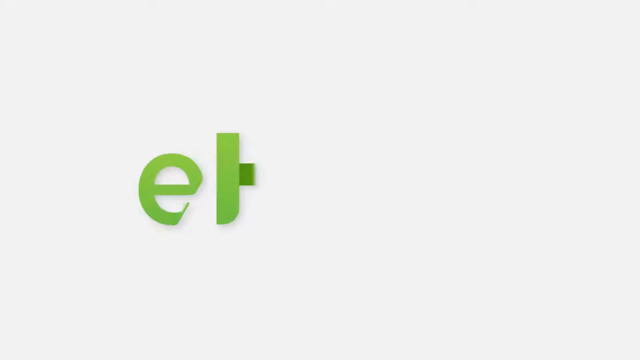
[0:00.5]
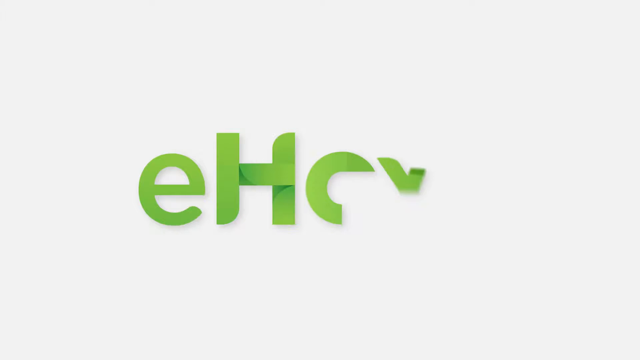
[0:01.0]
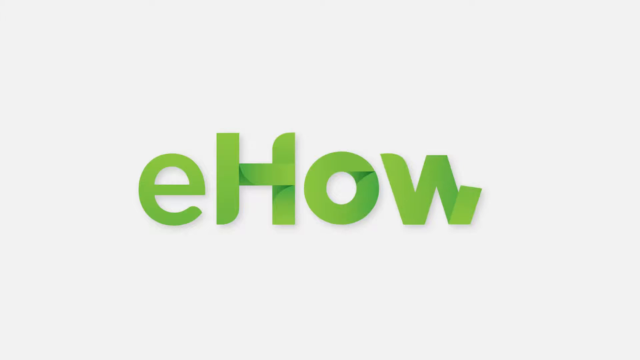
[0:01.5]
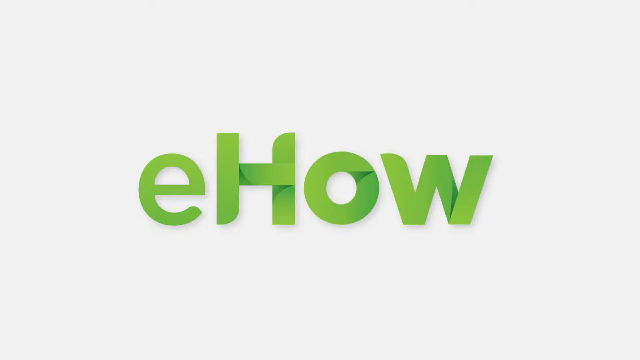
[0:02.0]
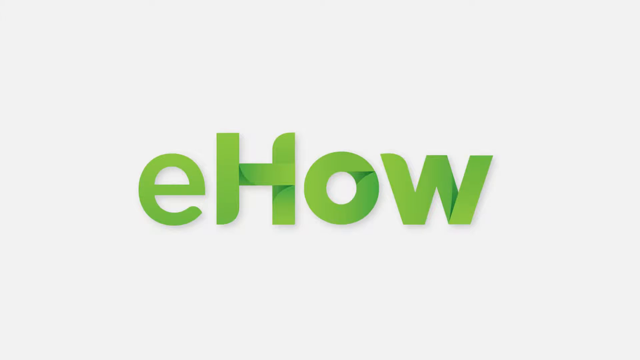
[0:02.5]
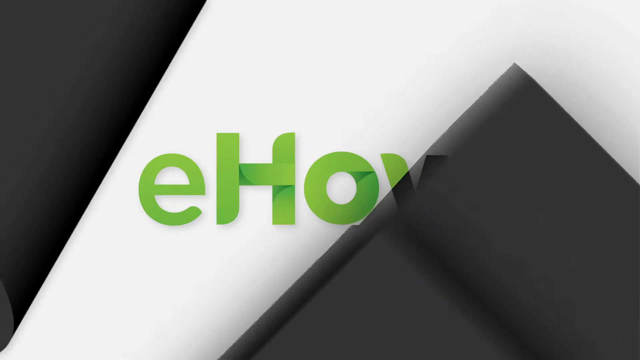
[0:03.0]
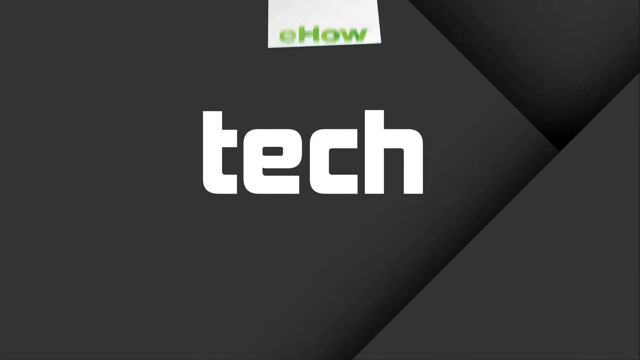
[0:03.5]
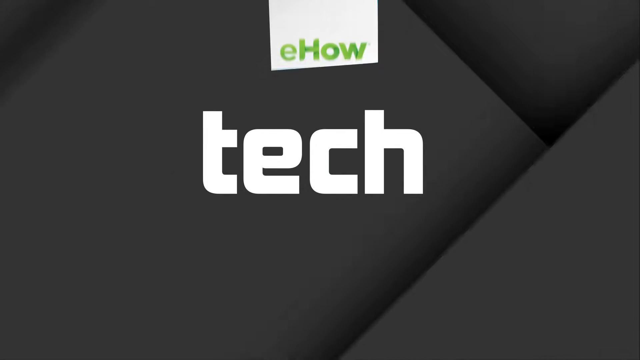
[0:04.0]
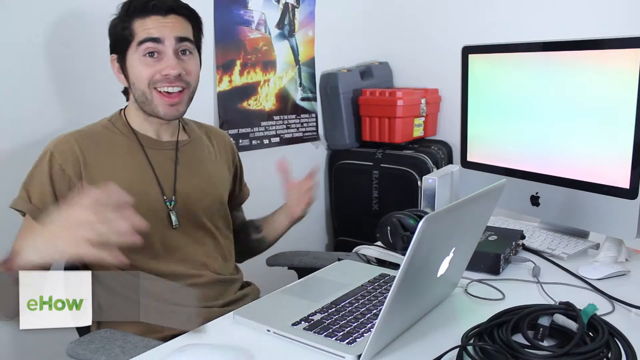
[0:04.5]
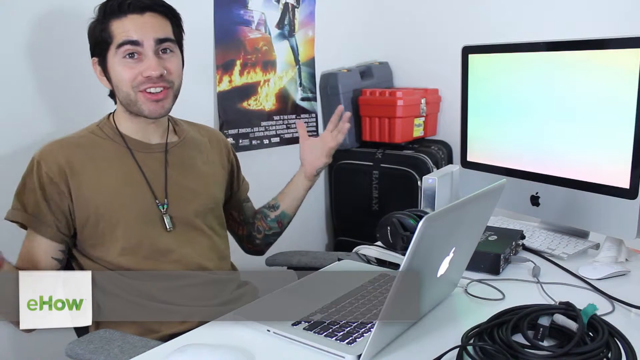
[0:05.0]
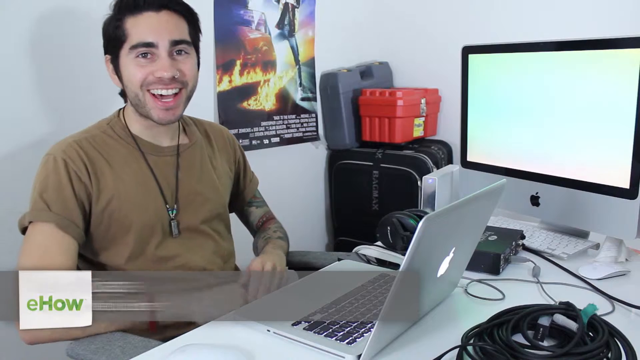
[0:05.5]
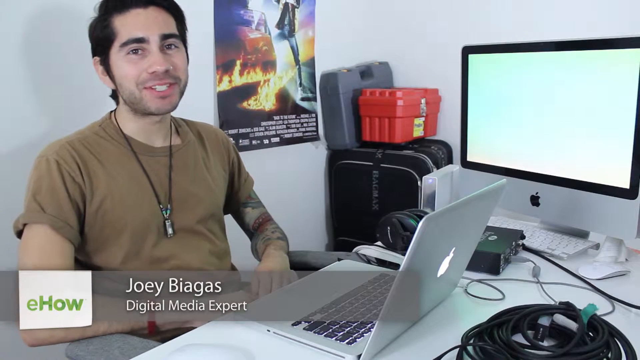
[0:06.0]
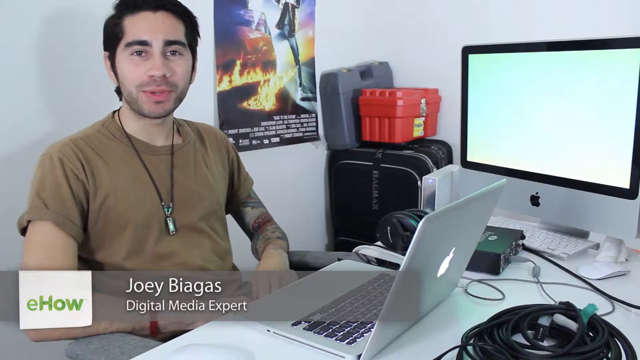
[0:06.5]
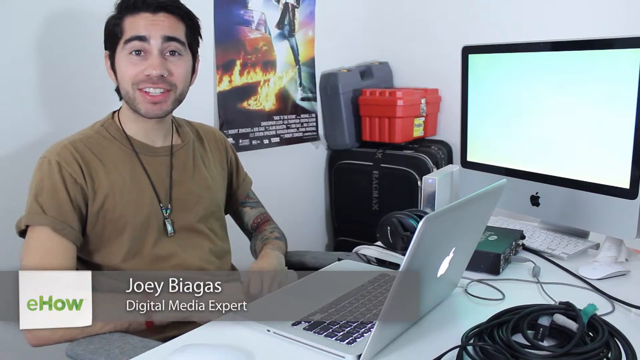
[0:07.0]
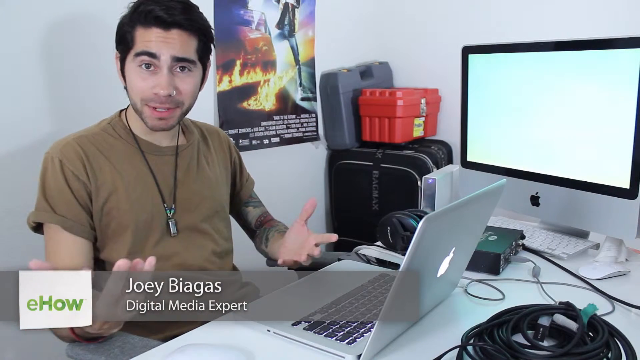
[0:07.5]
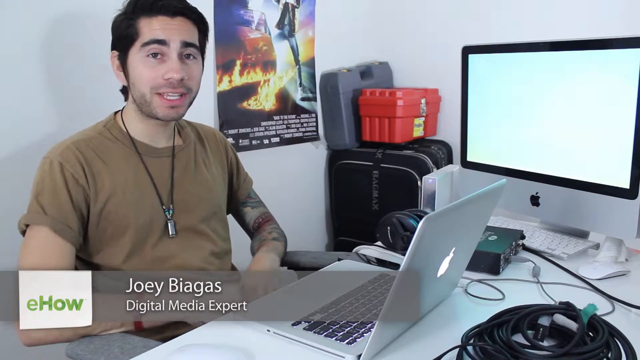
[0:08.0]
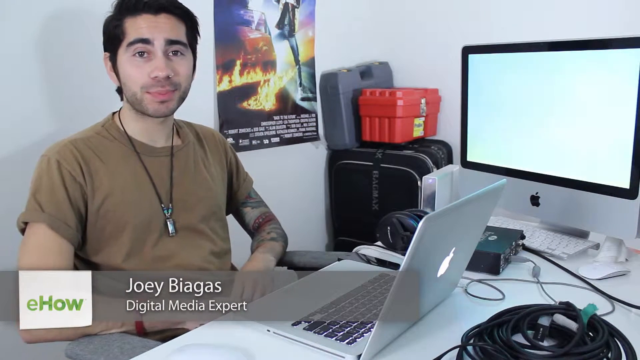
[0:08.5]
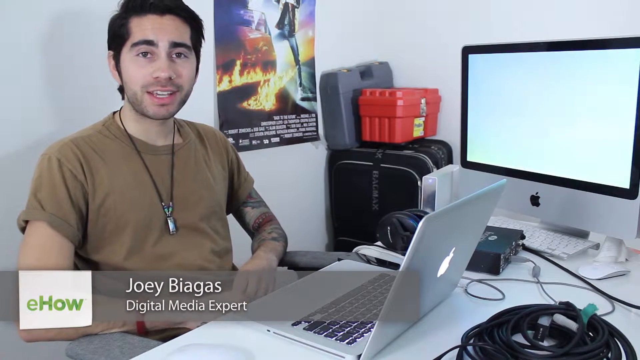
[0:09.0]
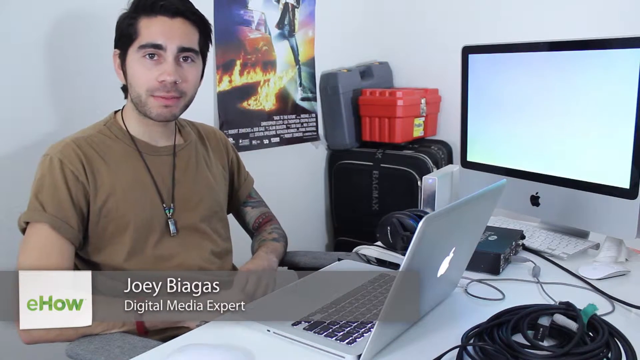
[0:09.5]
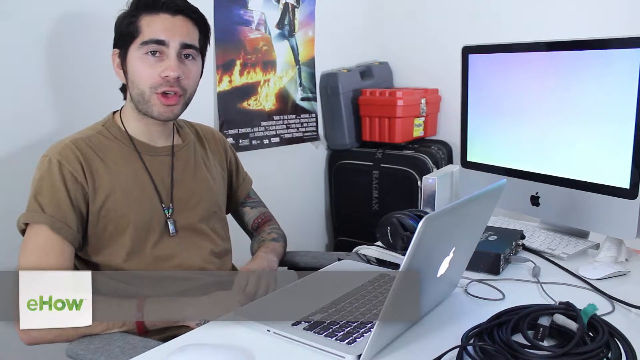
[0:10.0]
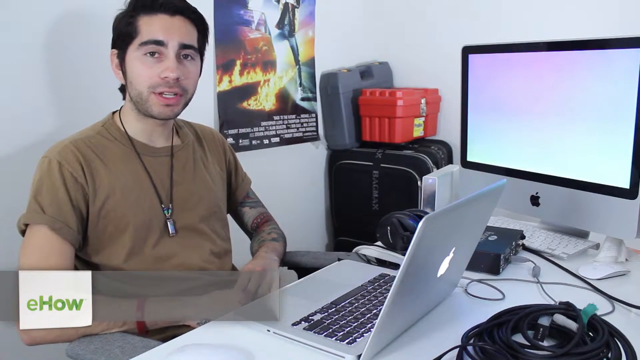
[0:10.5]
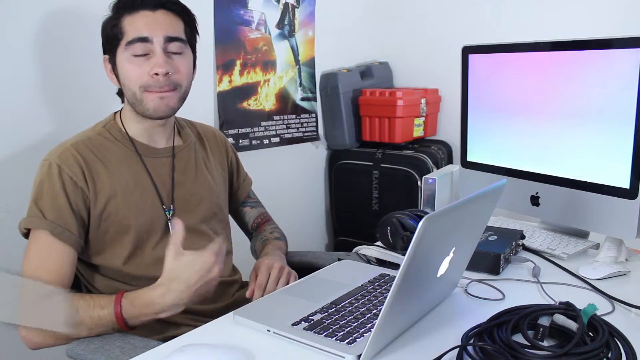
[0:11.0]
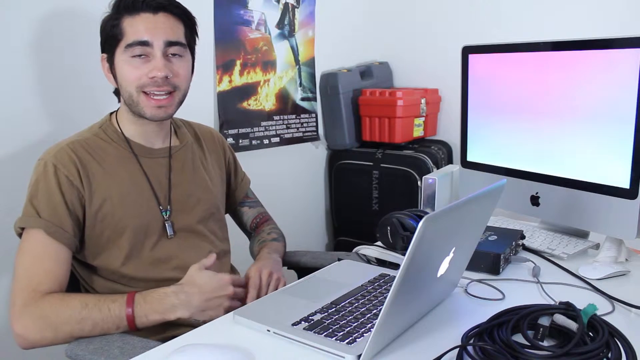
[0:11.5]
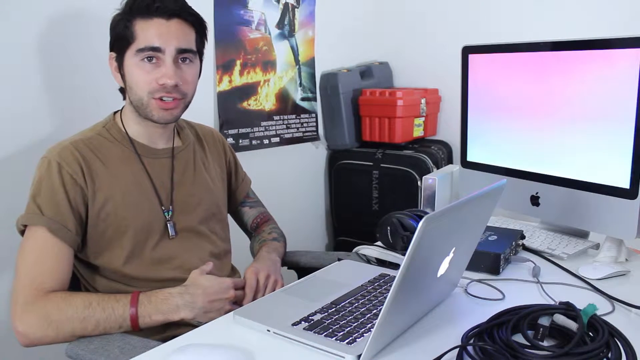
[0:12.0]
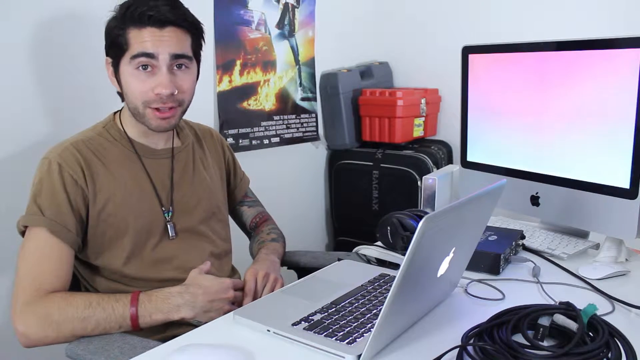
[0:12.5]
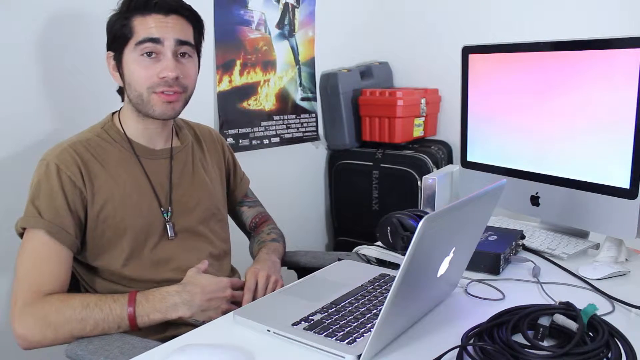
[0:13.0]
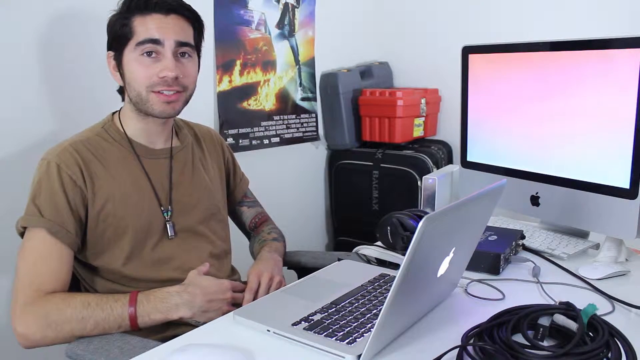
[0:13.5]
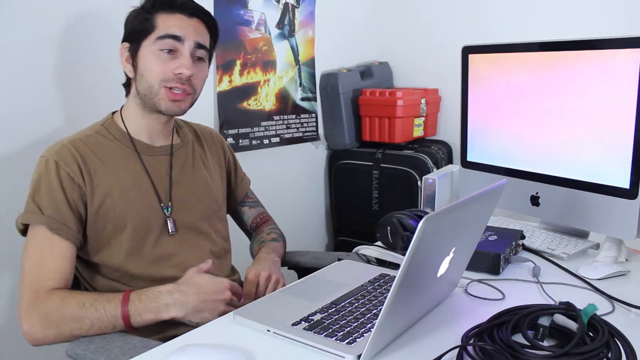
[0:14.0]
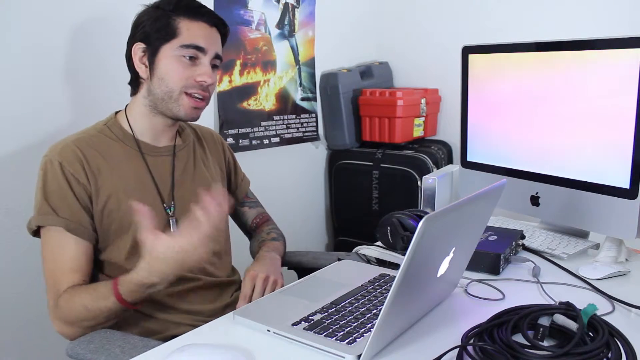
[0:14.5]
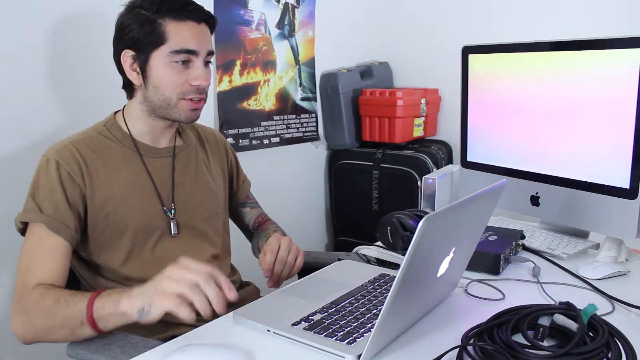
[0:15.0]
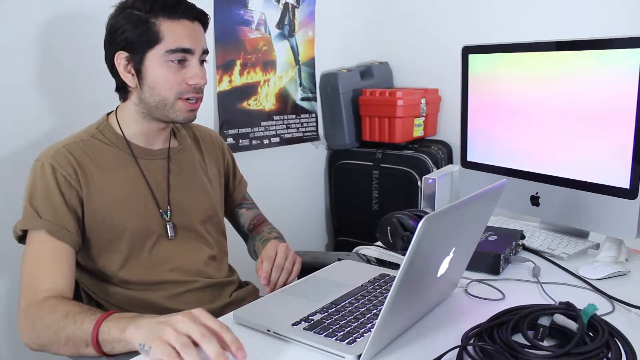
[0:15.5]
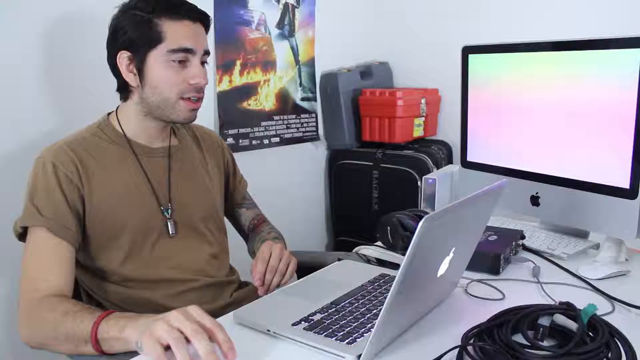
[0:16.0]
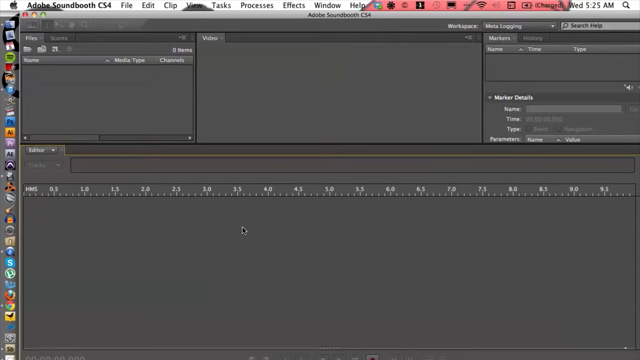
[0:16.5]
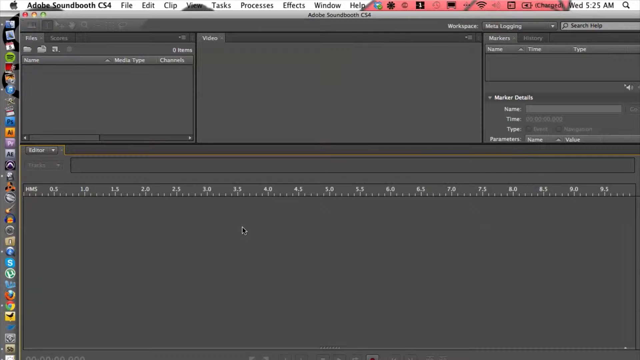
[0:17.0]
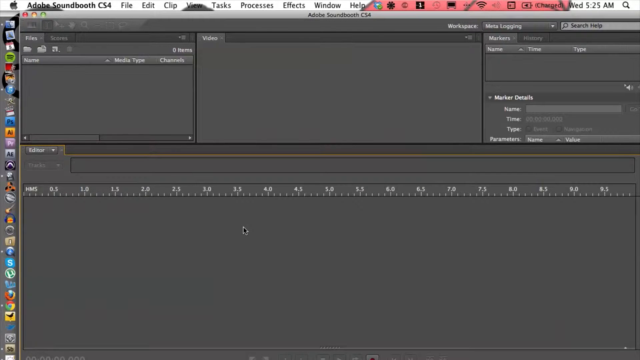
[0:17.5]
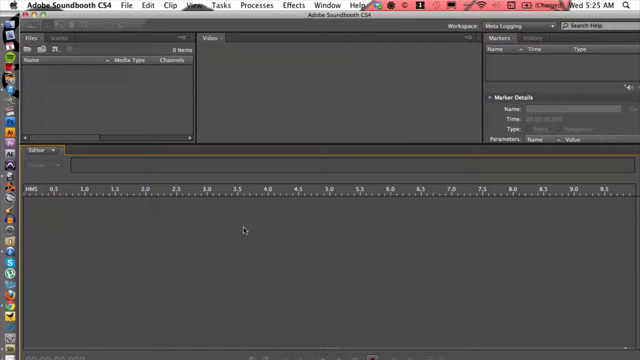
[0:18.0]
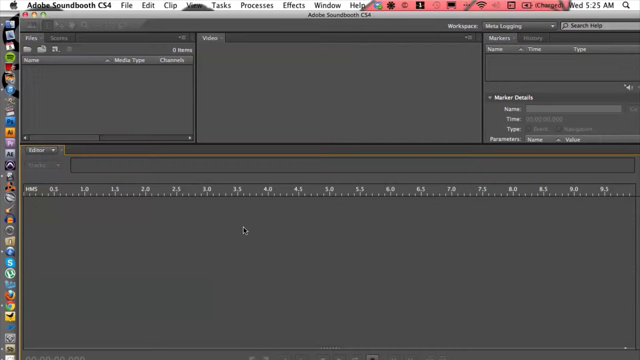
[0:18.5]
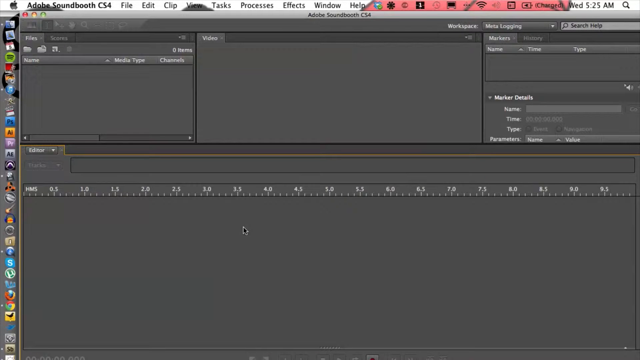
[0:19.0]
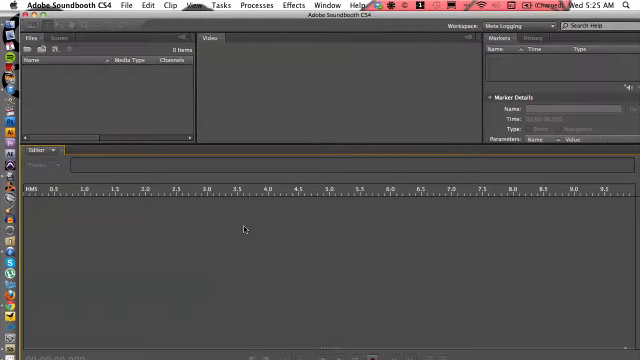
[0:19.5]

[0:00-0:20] The video opens with eHow, then goes to a black screen with "tech" at the center; the top says "eHow" in green text. A person with folded arms appears, with a tattoo on their arms. Text below says "Joey Villagas, digital media expert". On the wall in the back is a Back to the Future poster showing Marty, with some flames. To the right is what looks like an iMac monitor, and there is a toolbox. A laptop is up in the front, and there is tech all around. The view switches to some sort of interface with icons on the very far left. The window is for Adobe Soundbooth CS4, with the menus File, Edit, Clip, View, Tasks, Processes, Effects, Window and Help. The top right says "Wednesday, 525 AM". The man then gestures with his hands while talking and looks at the monitor.